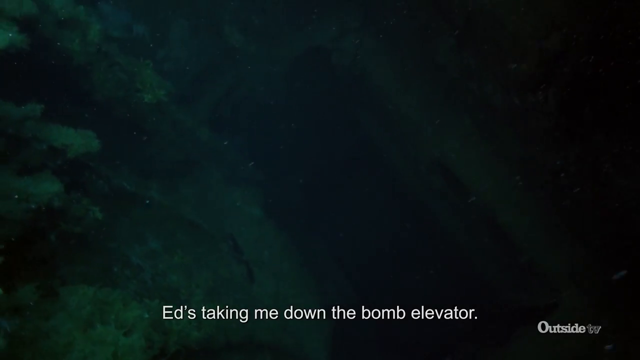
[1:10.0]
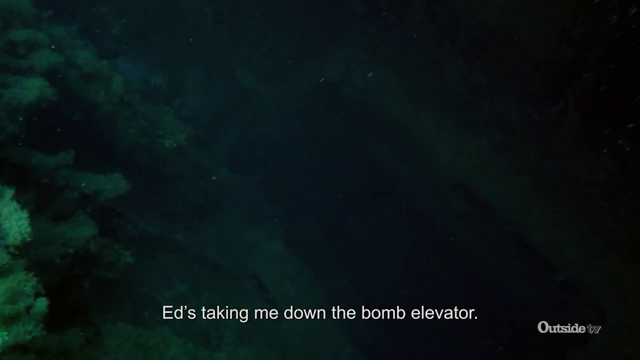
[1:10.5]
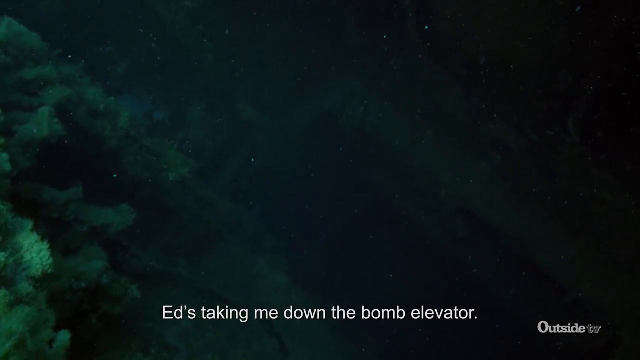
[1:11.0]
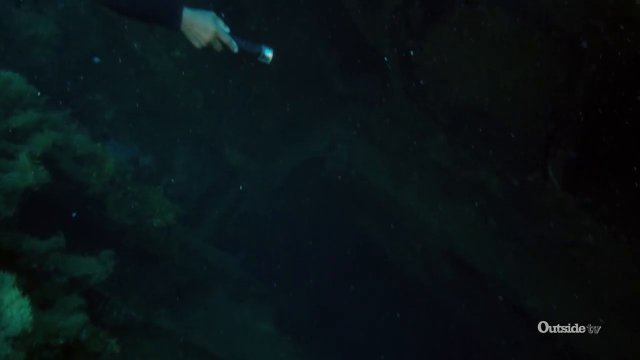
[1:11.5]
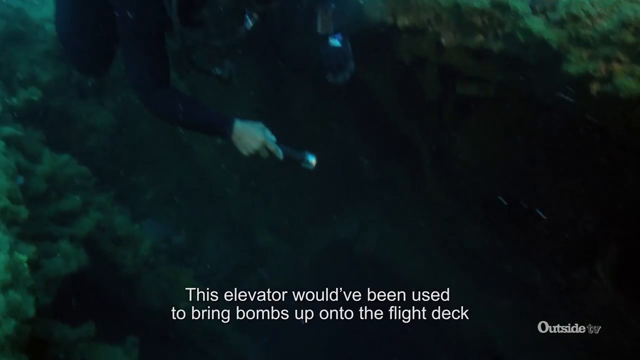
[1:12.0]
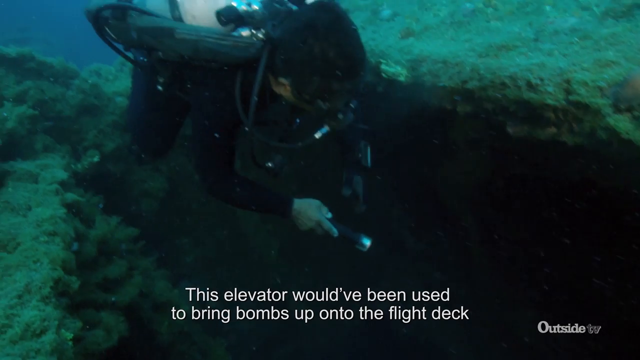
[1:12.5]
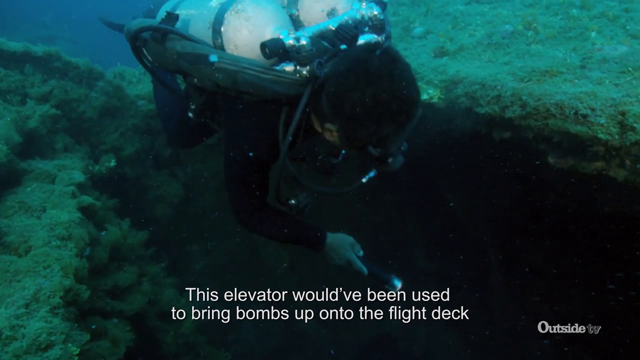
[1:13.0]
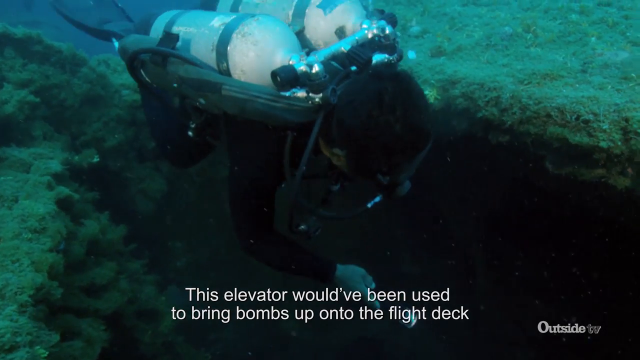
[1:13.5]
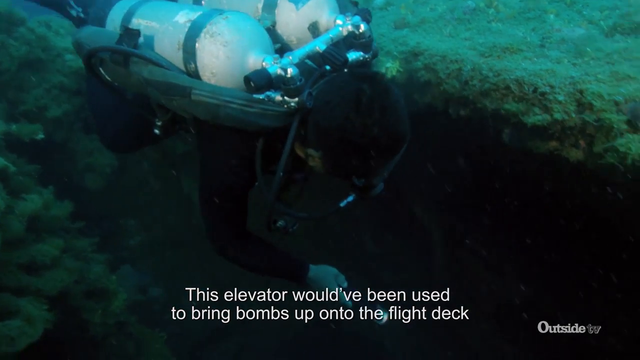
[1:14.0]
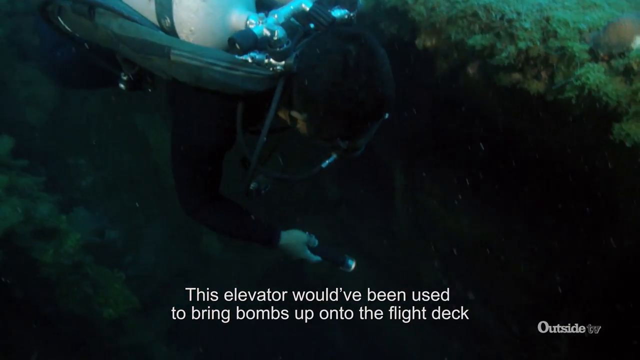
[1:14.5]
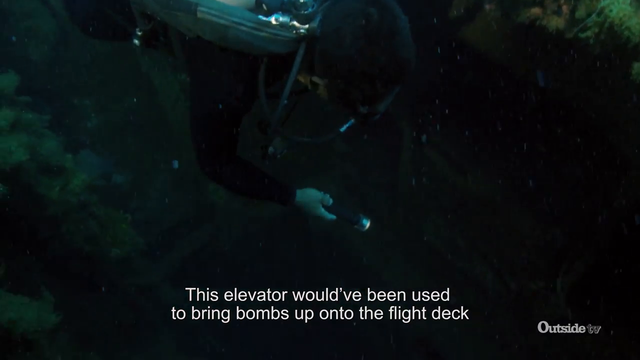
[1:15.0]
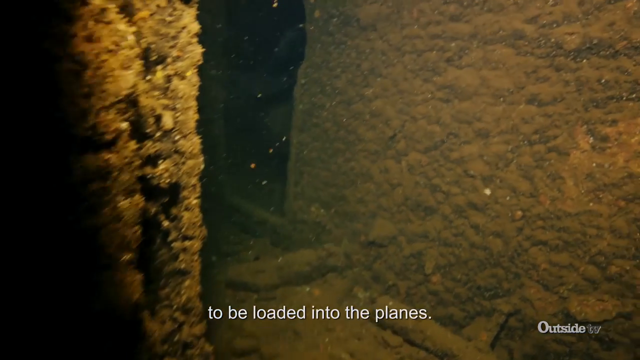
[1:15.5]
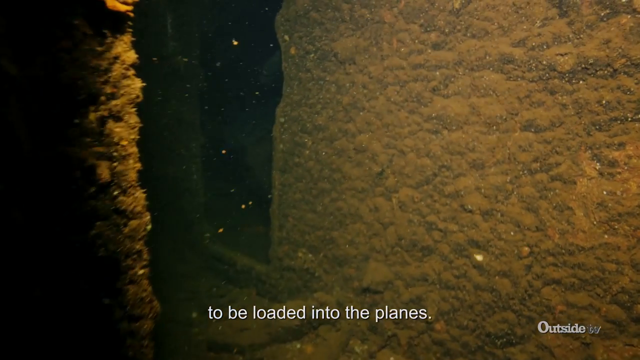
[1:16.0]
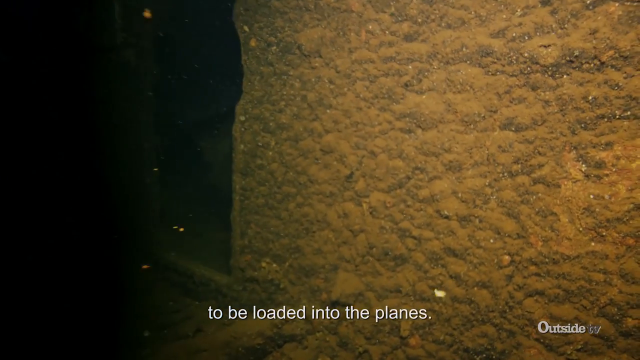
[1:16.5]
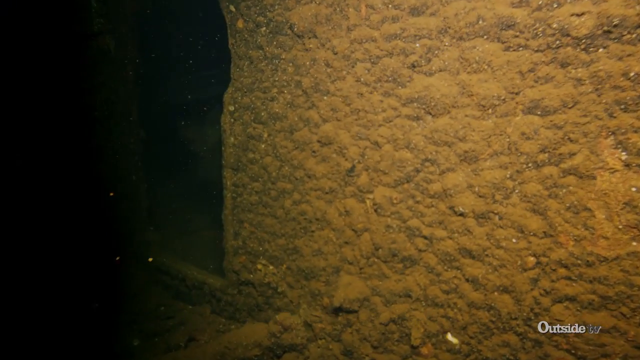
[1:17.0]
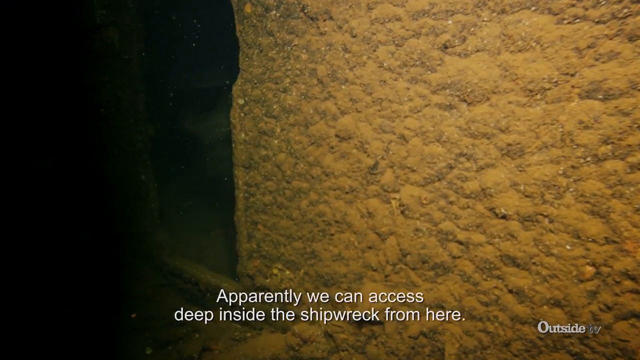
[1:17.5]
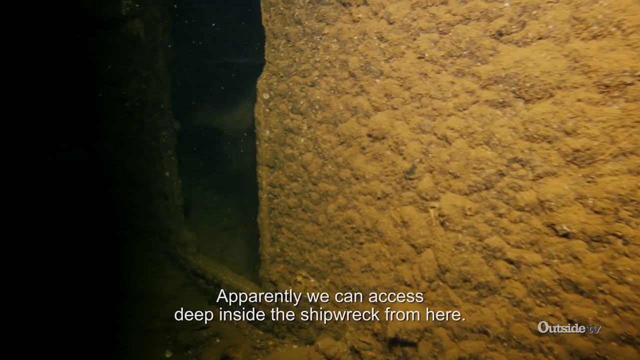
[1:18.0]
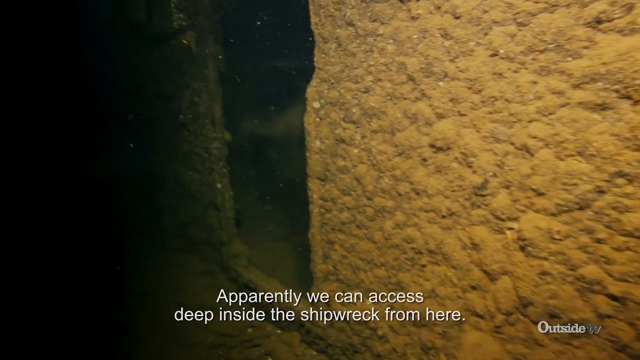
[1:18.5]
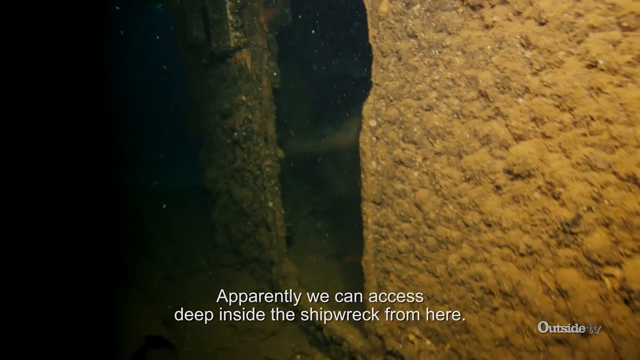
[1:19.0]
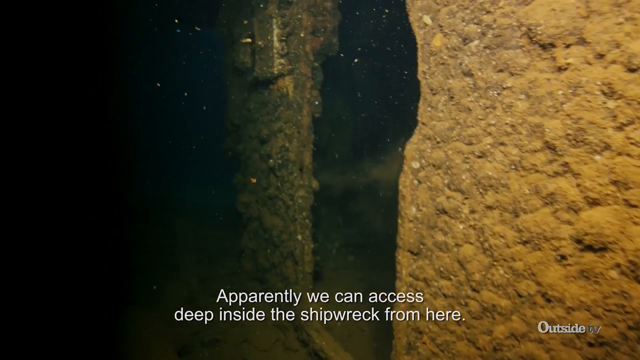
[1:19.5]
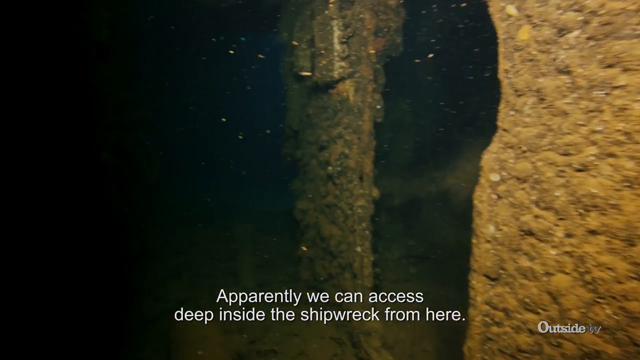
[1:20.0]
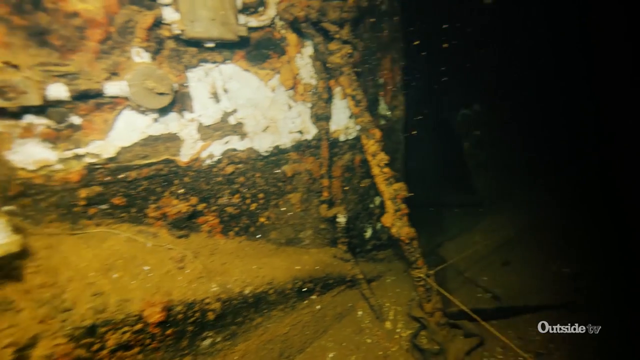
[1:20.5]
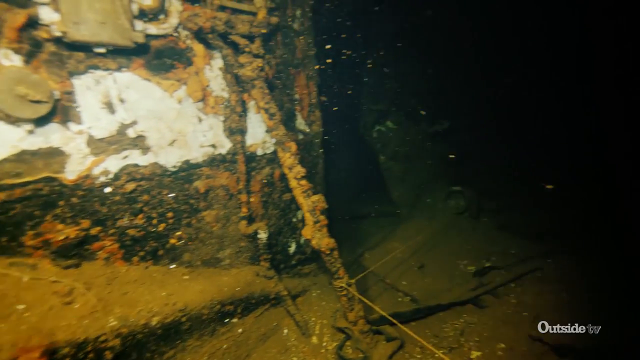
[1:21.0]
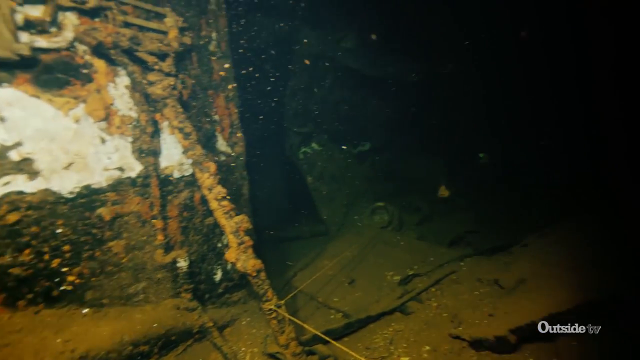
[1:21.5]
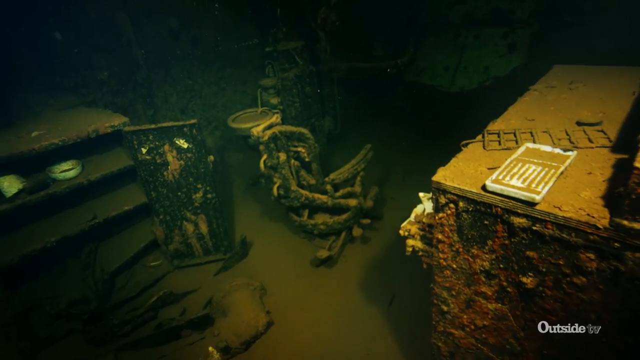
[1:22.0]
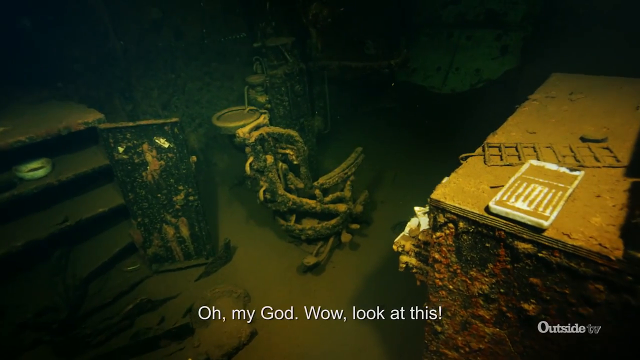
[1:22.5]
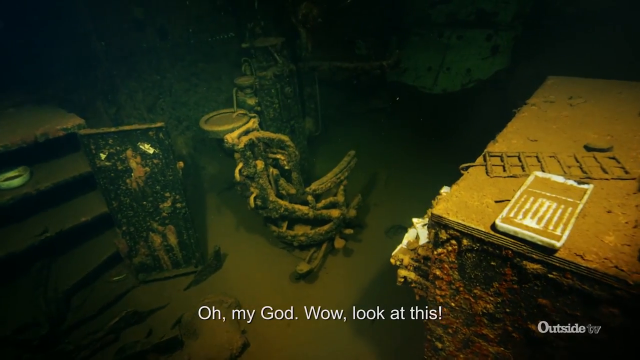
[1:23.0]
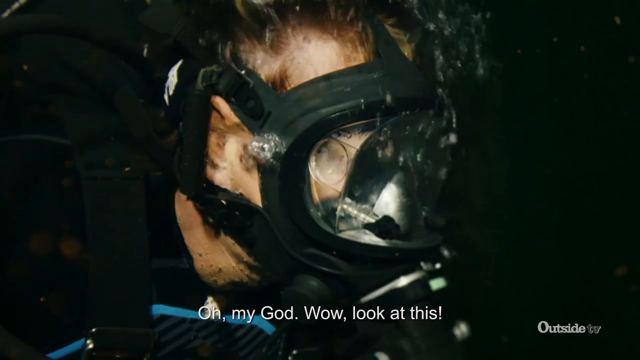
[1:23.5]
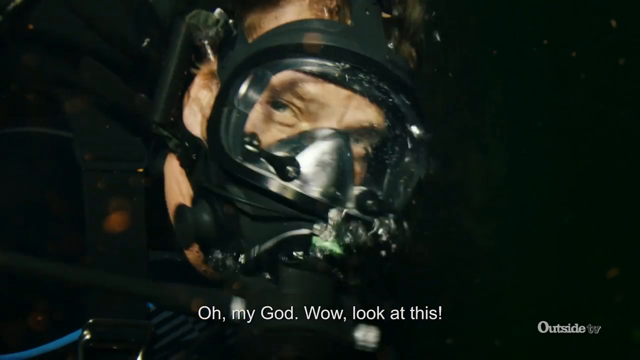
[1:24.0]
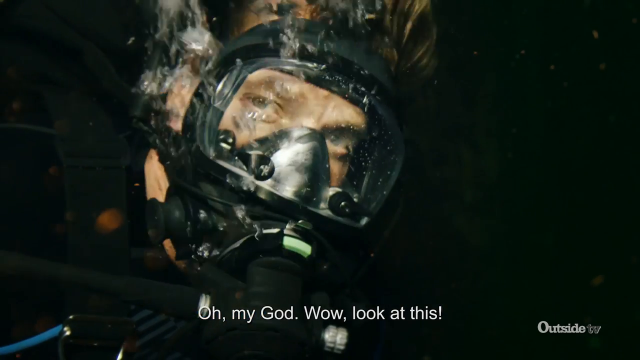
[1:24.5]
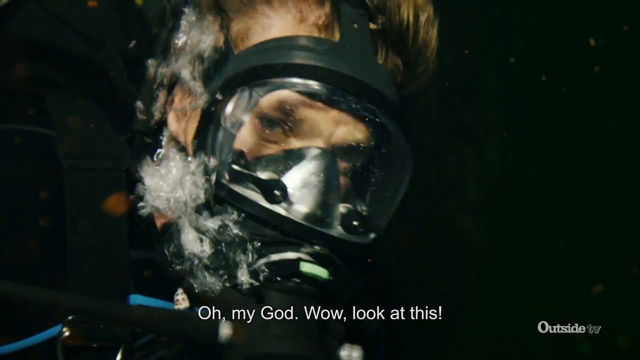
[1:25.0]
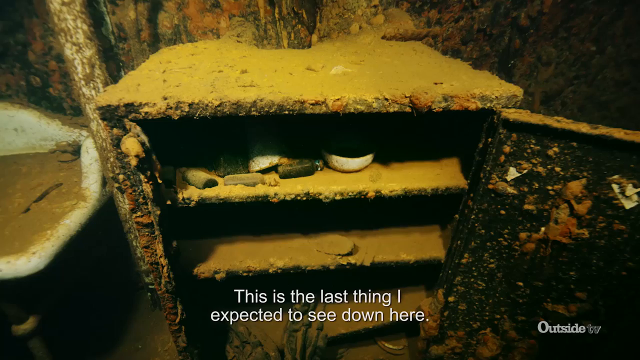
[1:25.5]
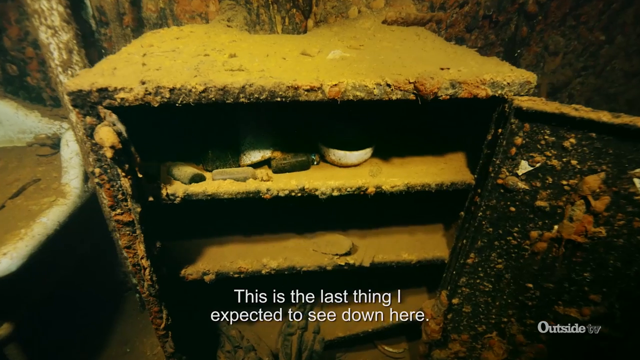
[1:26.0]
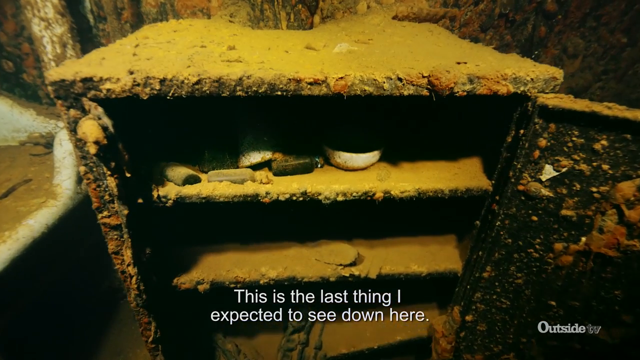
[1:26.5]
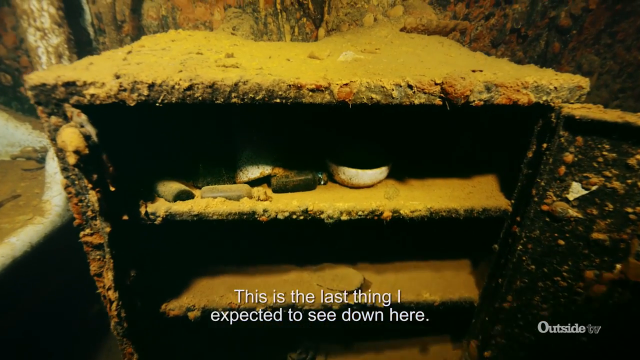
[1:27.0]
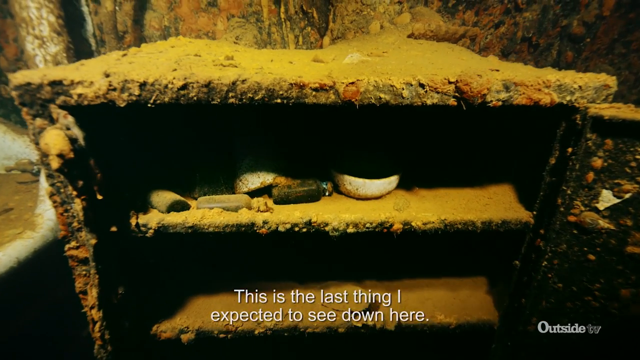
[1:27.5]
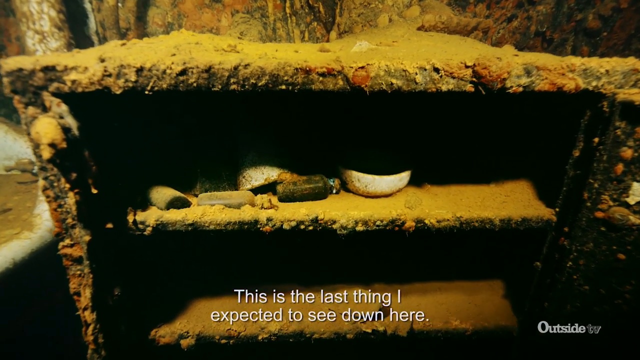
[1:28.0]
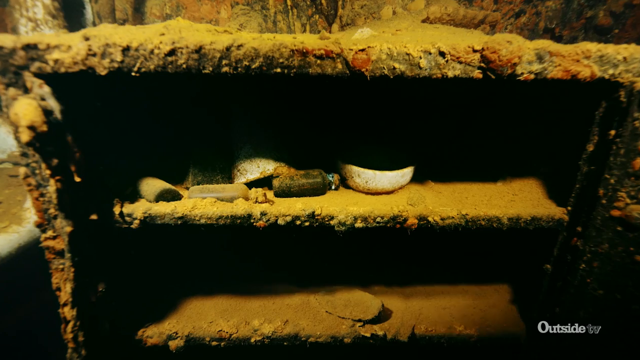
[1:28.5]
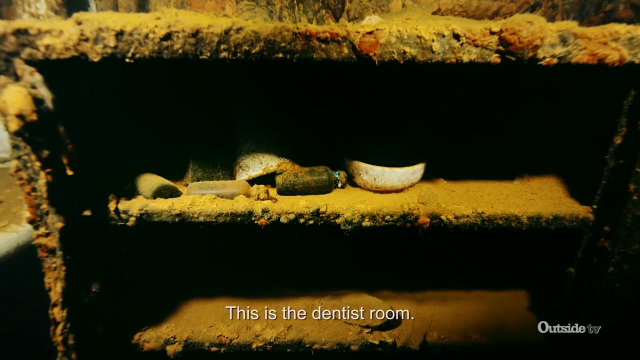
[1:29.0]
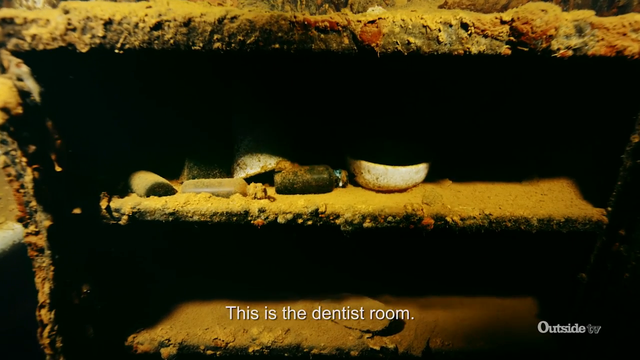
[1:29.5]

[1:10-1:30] A dark shot has white text at the bottom stating "Ed's taking me down the bomb elevator." It changes to a scuba diver holding a flashlight, and the text changes to "This elevator would have been used to bring bombs up onto the flight deck to be loaded onto the planes." A first-person view swims through the wreckage of the ship, with white text saying "Apparently we can access deep inside the shipwreck from here." Several other underwater shots of the shipwreck follow, including chairs and a desk, with white text at the bottom stating "Oh my God! Wow, look at this!" A close-up shows a man looking towards the camera, with white text reading "This is the last thing I expected to see down here. This is the dentist room." The camera zooms in on a cabinet with some small items inside.